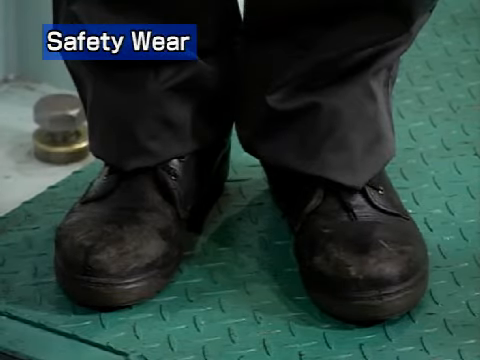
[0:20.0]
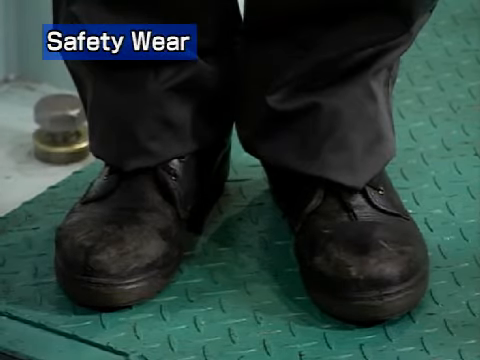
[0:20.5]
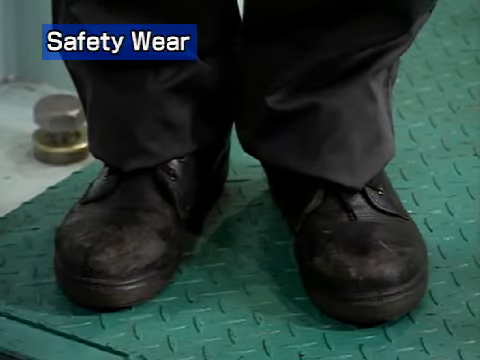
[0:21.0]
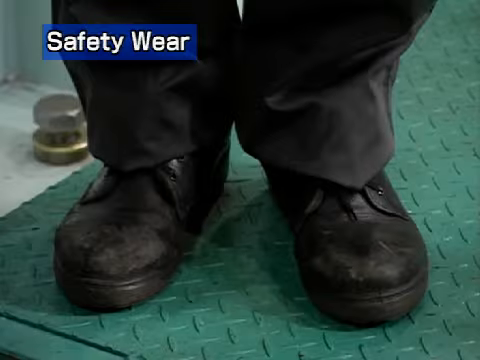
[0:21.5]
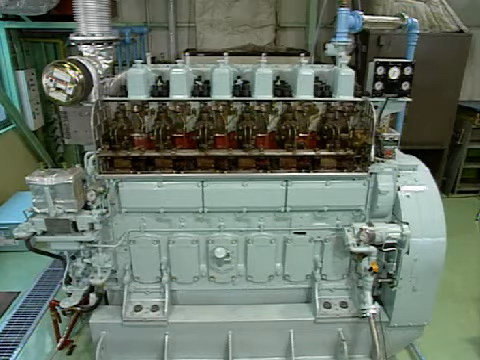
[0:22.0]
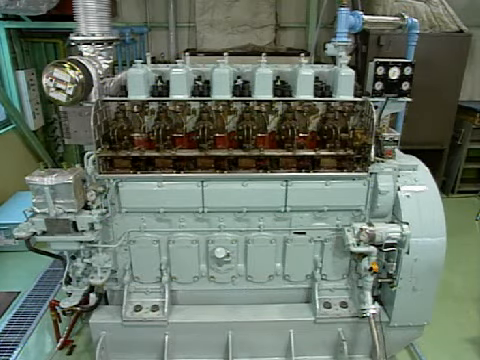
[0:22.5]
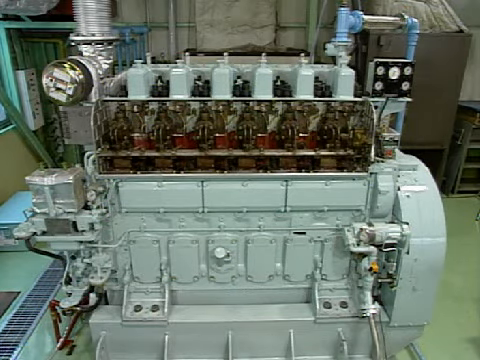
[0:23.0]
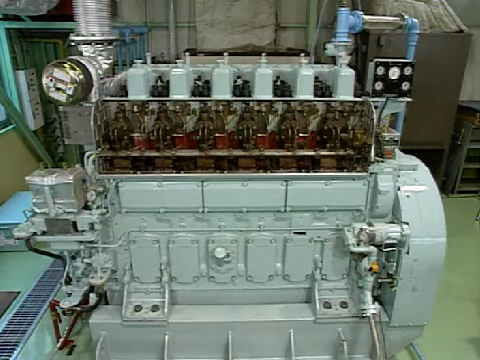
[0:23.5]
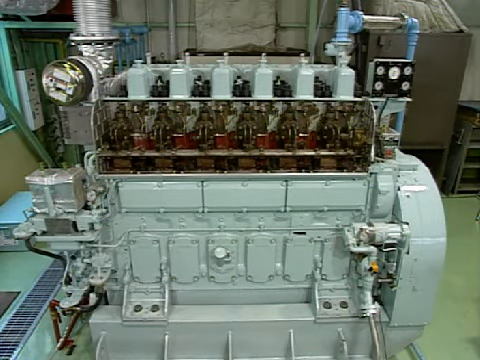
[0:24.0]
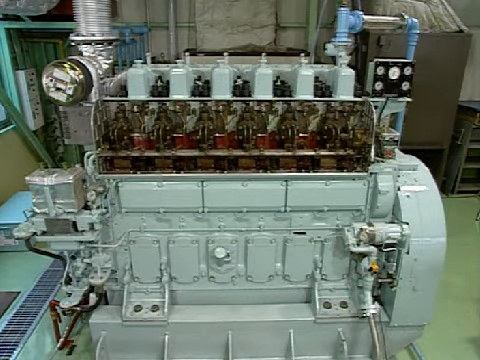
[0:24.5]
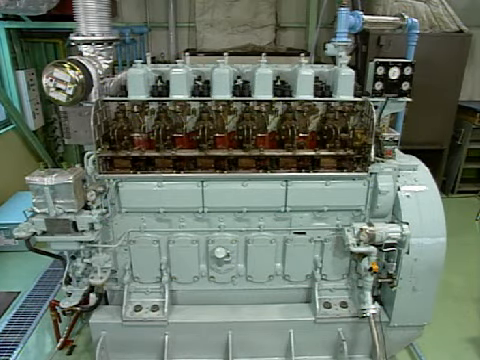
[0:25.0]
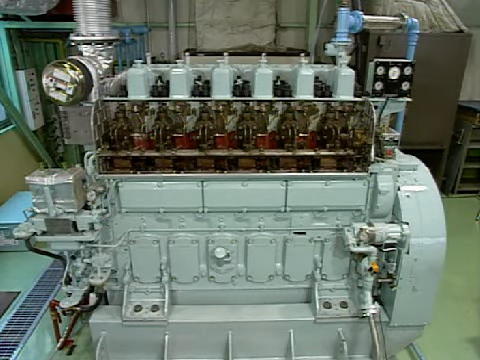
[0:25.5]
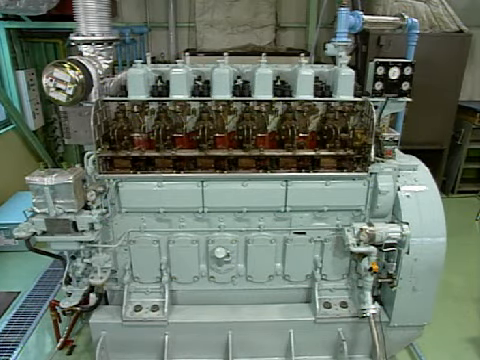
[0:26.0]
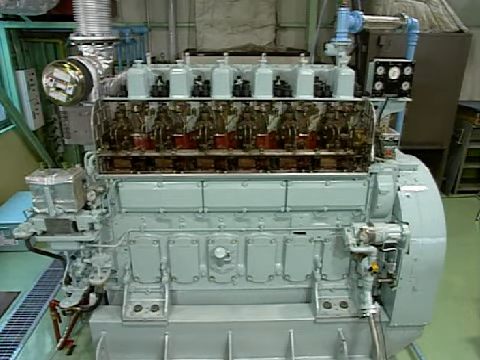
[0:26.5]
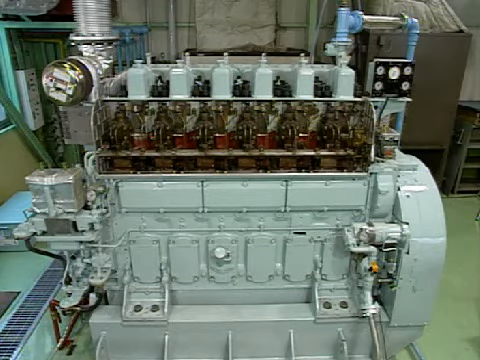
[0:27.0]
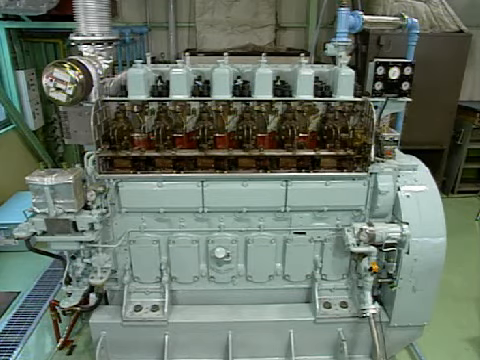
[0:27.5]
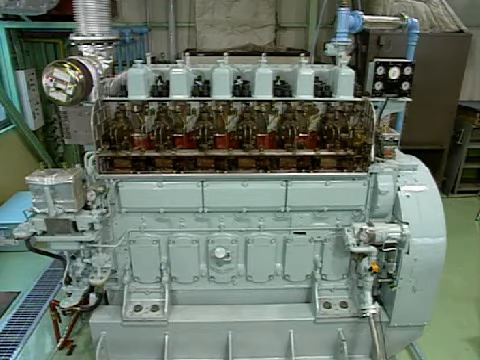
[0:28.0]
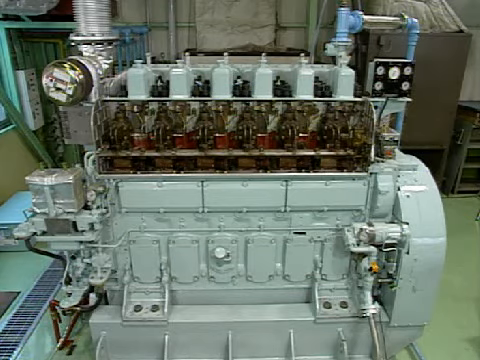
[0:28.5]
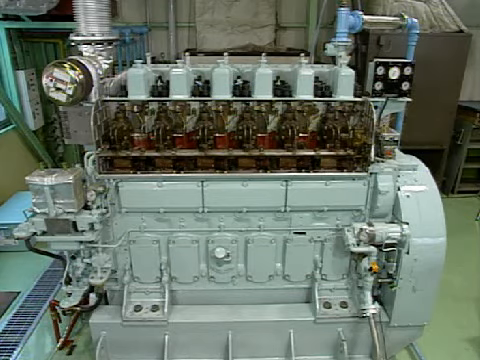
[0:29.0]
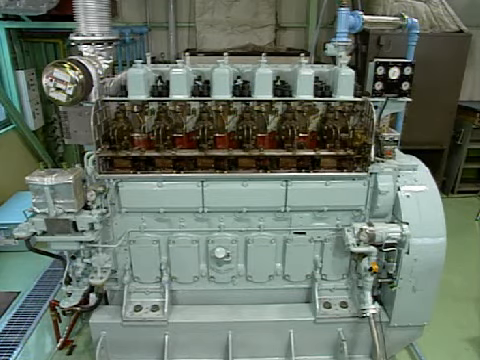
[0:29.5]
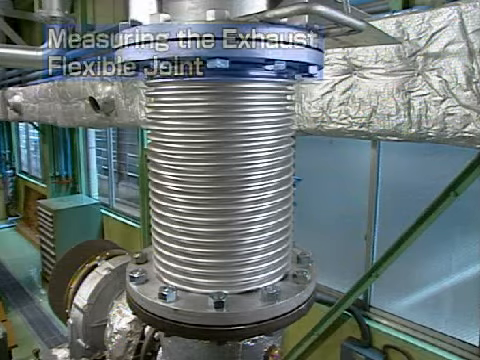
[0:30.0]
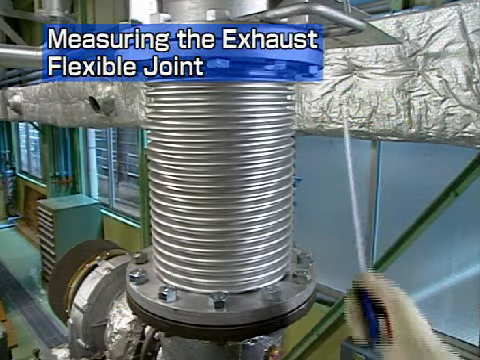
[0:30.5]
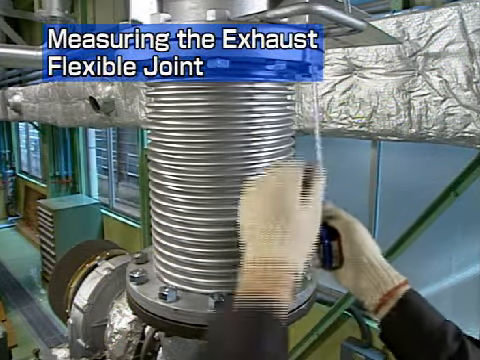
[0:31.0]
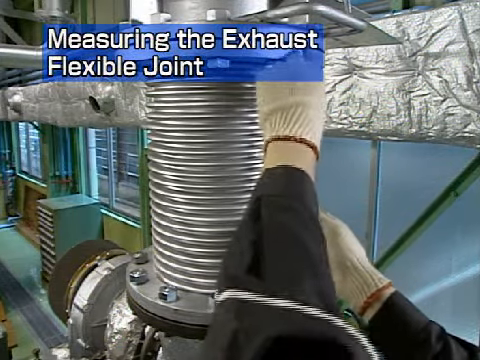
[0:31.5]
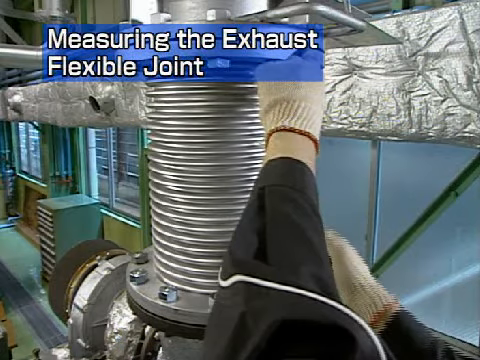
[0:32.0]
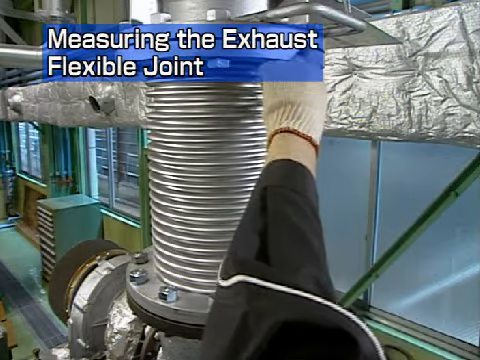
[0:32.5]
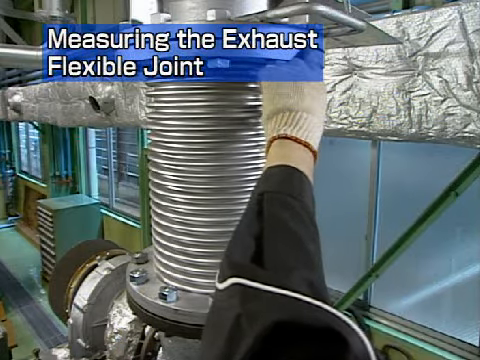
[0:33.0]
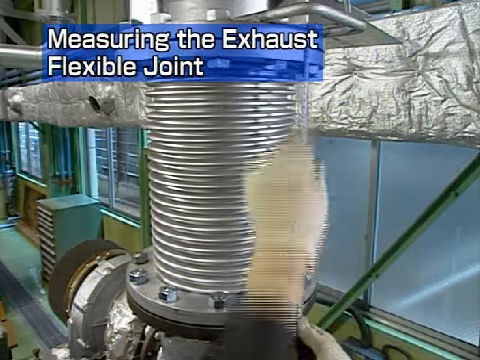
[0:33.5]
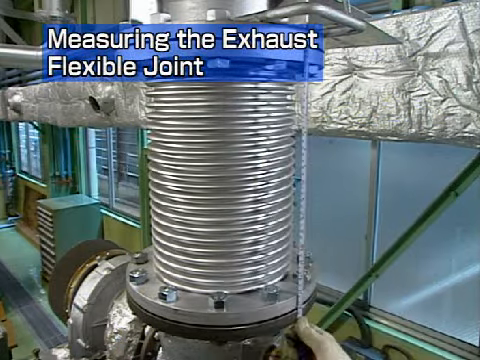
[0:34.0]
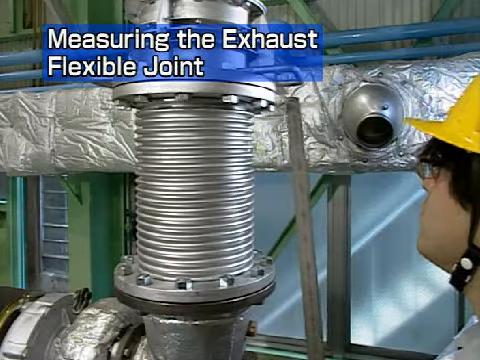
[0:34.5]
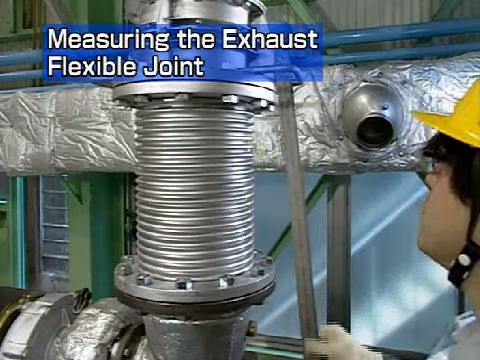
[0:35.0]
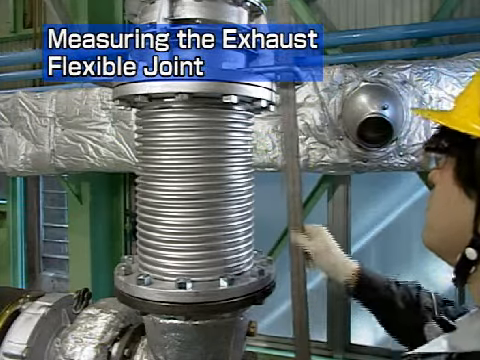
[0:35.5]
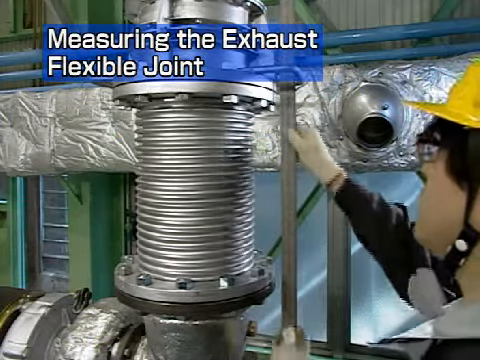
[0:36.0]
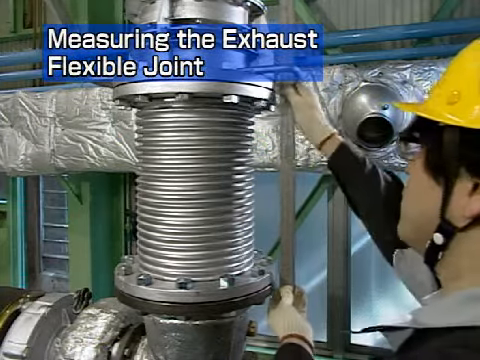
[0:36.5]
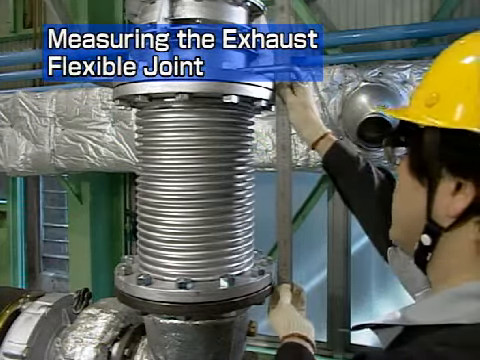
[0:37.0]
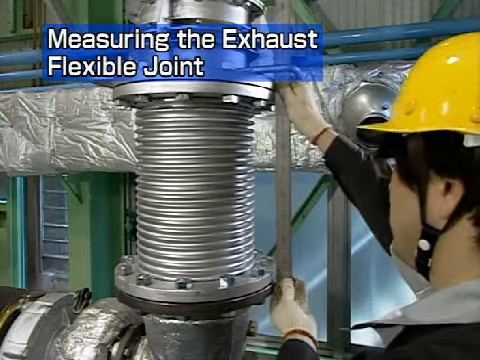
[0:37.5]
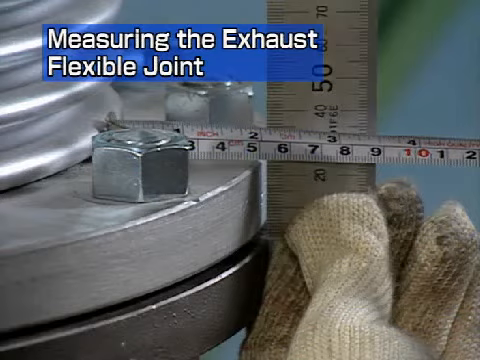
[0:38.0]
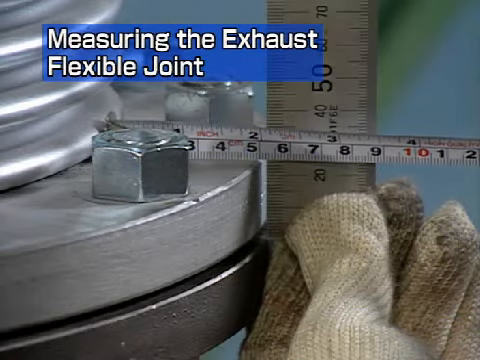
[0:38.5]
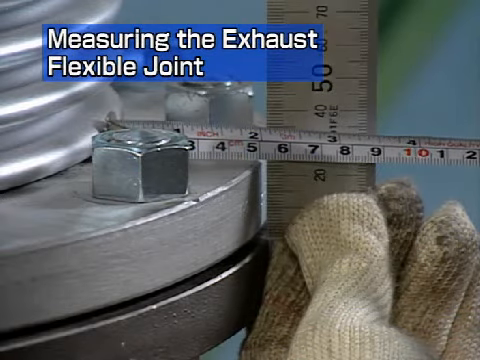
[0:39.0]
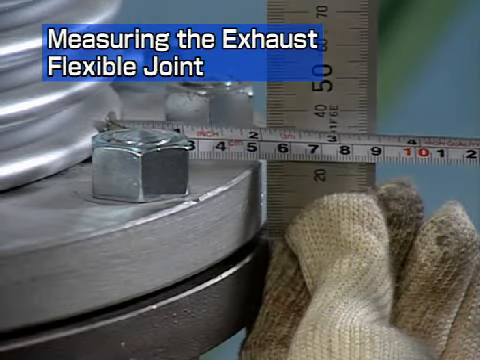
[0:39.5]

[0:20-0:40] The factory shoes are shown in detail, with a large metal plate on the tip. The machine is shown in detail as well: it is gigantic, a very large light blue machine that looks like something that moves with pressure, with gas. The exhausts on the flexible joints are explained, and the worker measures how many inches the exhaust is.